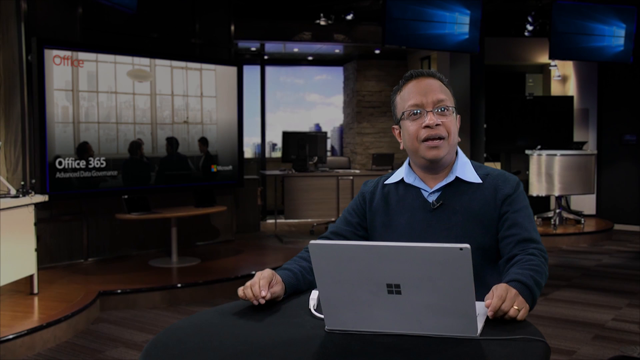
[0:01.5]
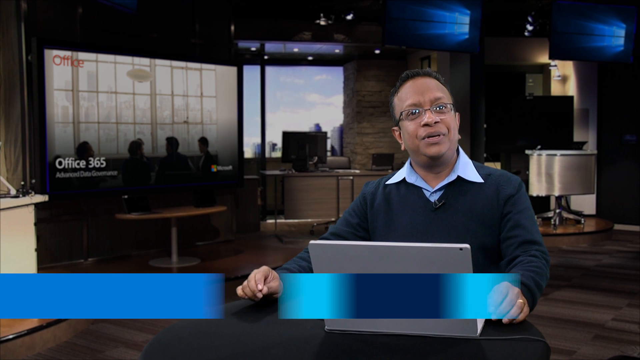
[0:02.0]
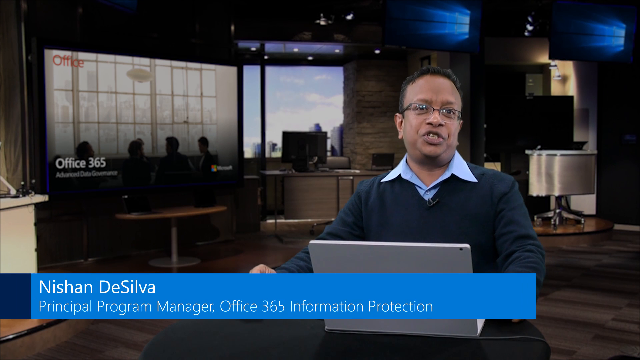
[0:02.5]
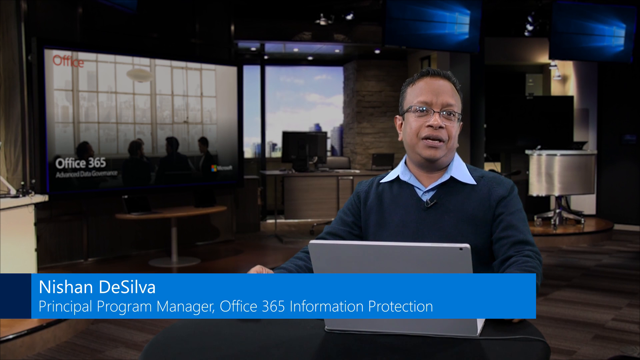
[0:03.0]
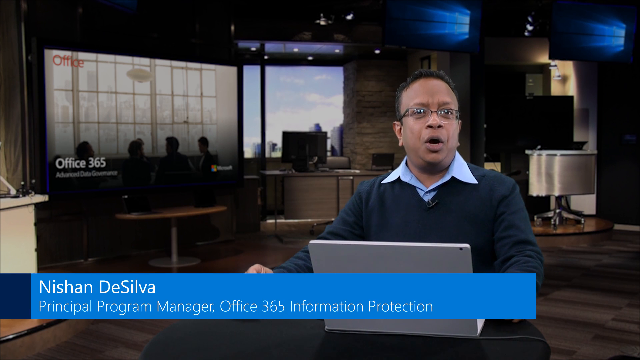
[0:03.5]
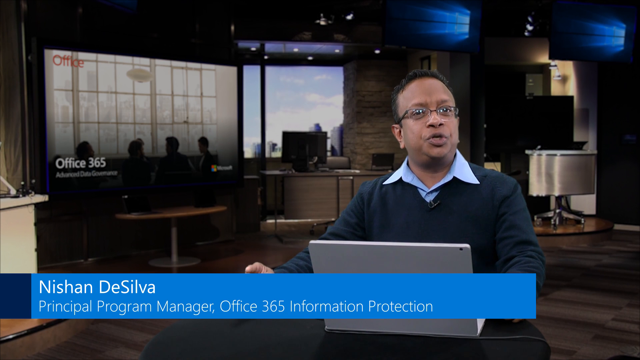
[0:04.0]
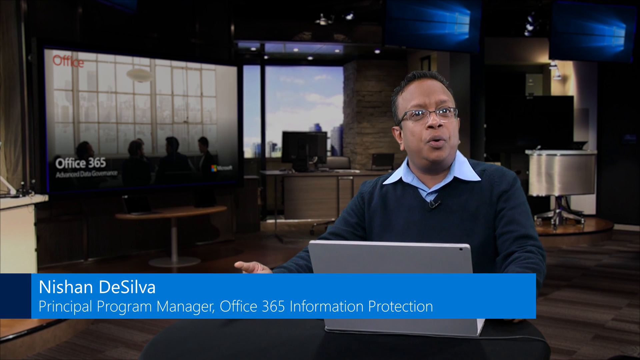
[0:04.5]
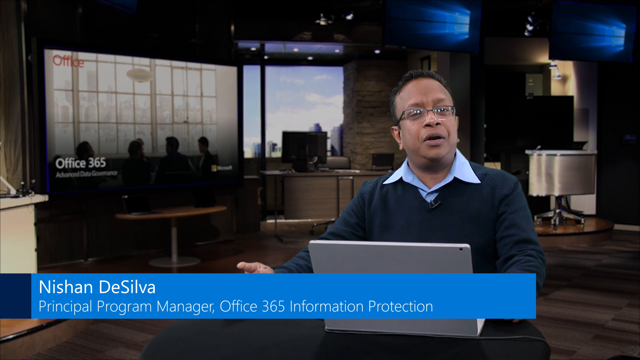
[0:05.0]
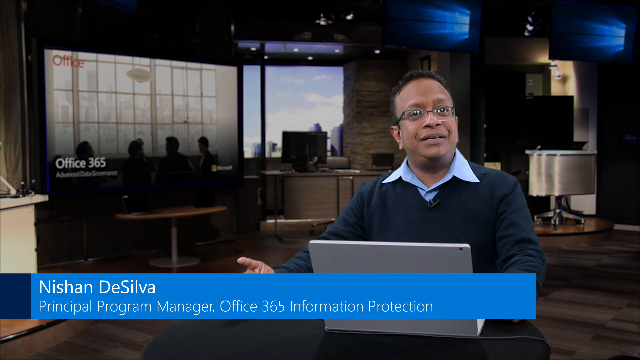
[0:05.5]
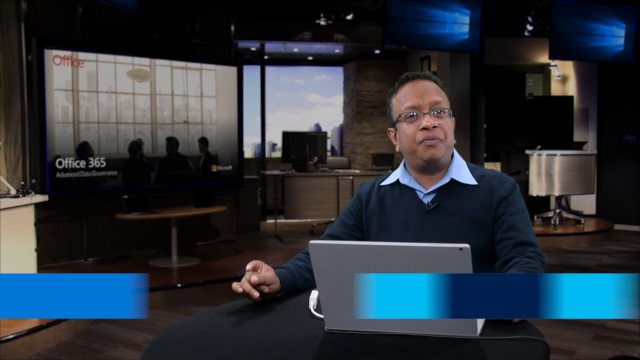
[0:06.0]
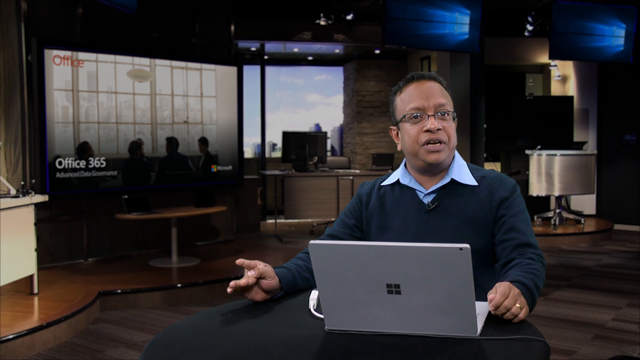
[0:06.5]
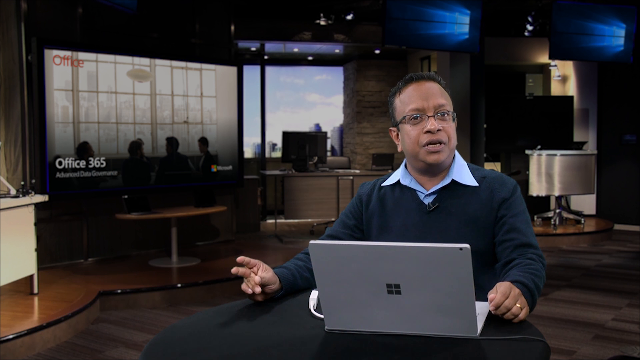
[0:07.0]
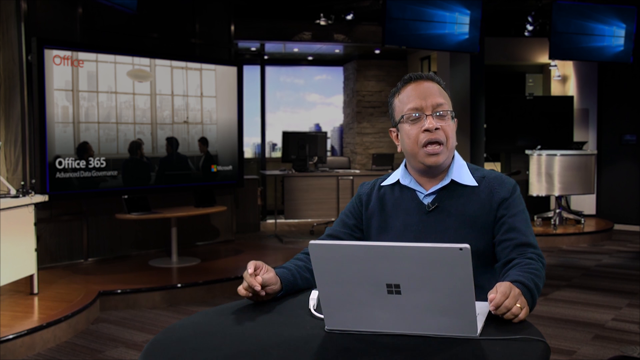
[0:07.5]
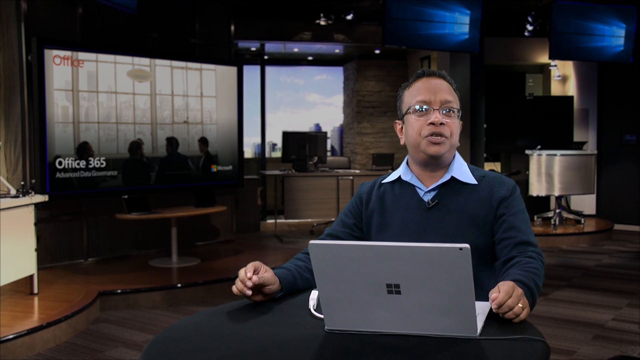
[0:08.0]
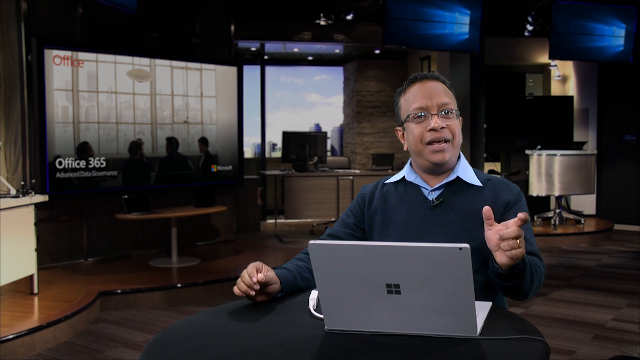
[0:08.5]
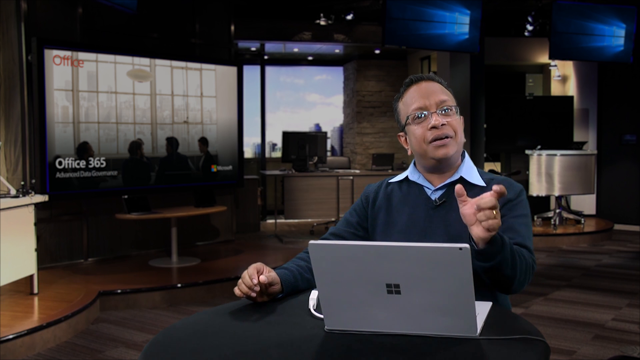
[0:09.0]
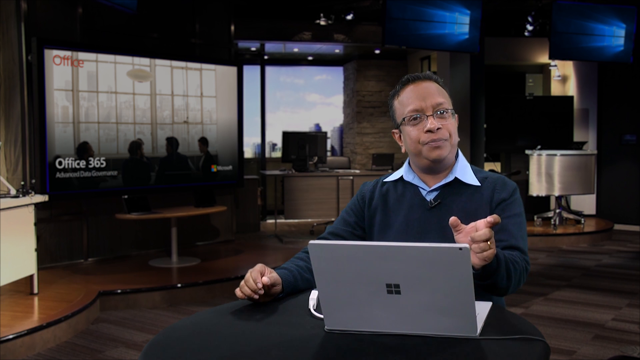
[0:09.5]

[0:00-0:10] A person sits in front of a laptop that seems to be an Apple laptop, looking at the camera and talking to the audience. He wears a blue sweater with a light blue collared shirt underneath, its collar sticking out, and glasses. At the bottom of the screen his name appears in white text on a blue background: "Nishan Da Silva". As he talks, his right hand is kind of wiggling its fingers, and he seems to be using his left hand to talk with his hands as well. He is in an office setting.